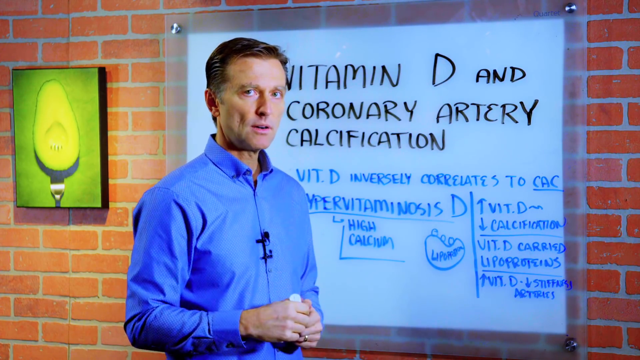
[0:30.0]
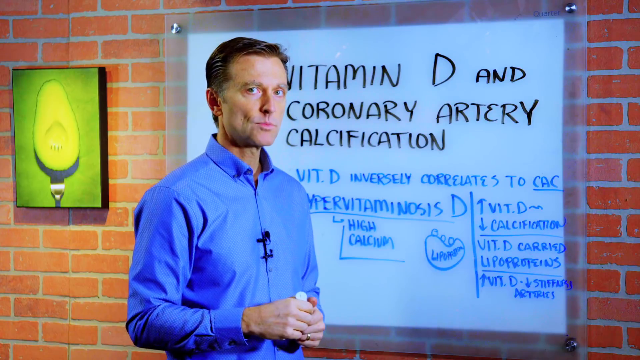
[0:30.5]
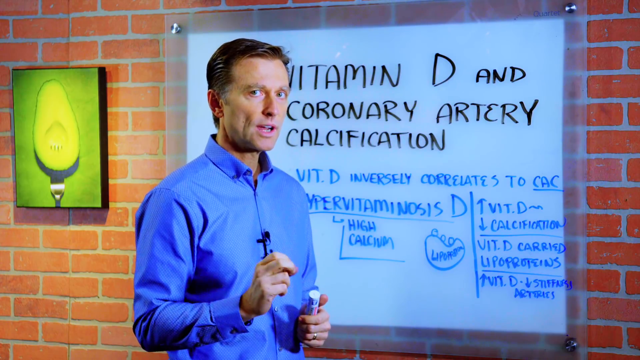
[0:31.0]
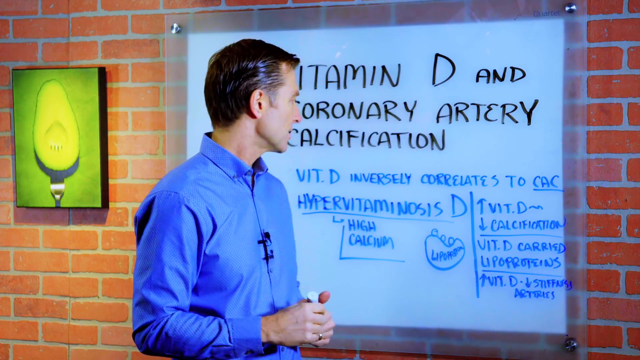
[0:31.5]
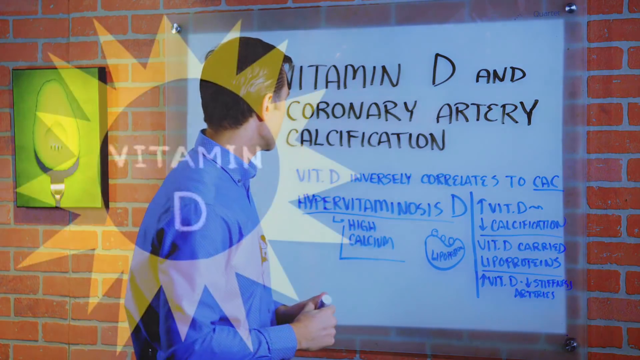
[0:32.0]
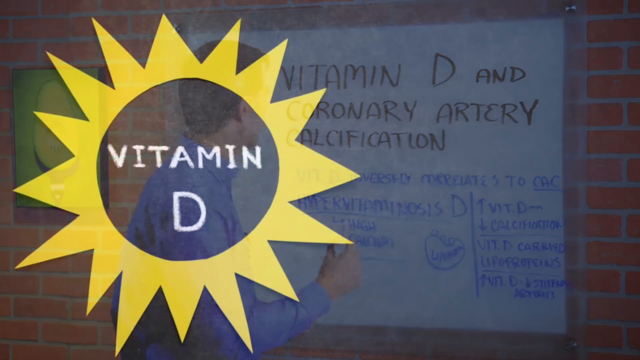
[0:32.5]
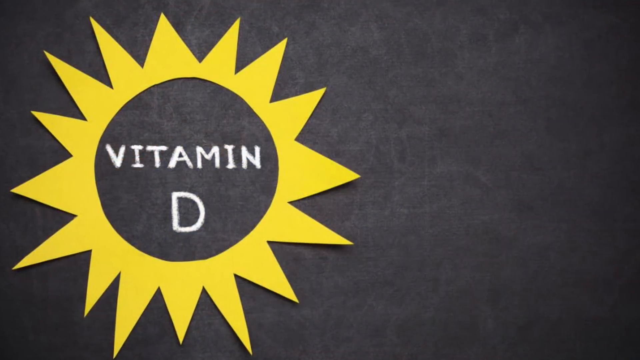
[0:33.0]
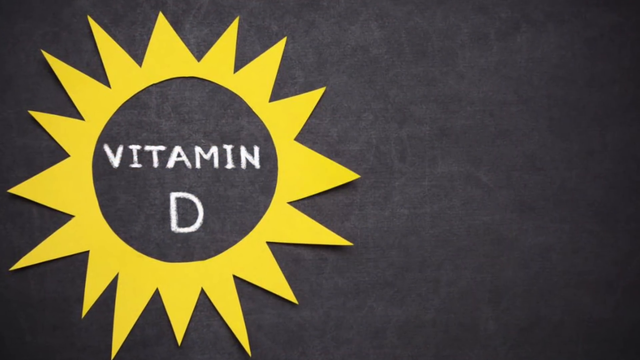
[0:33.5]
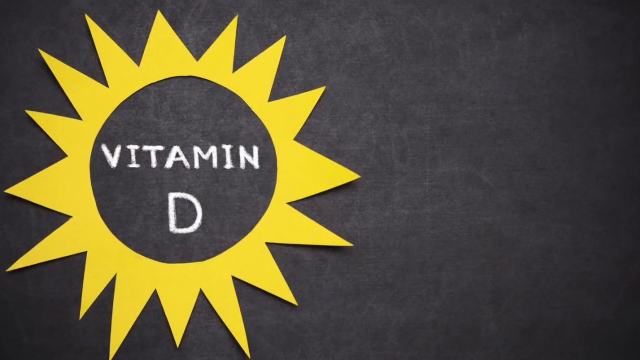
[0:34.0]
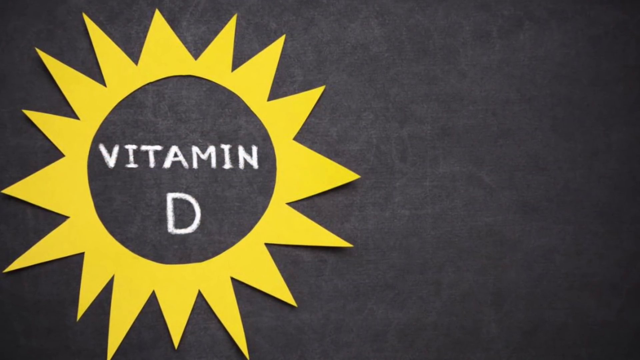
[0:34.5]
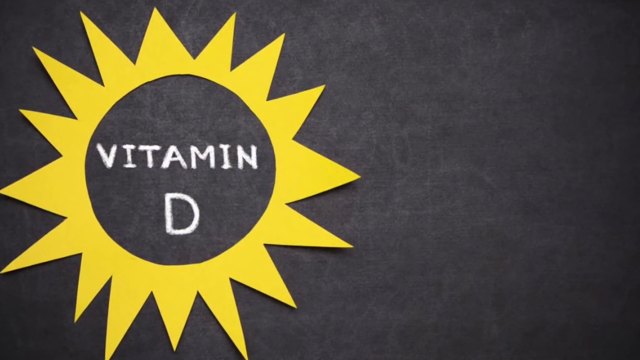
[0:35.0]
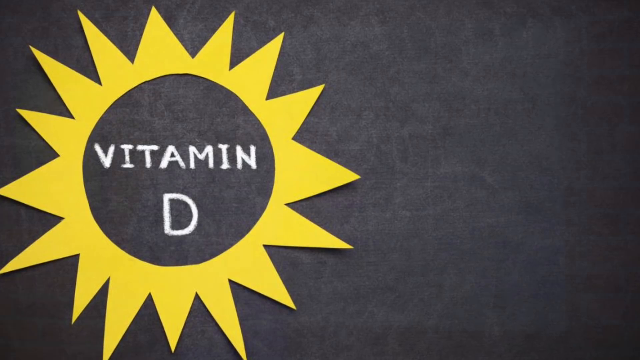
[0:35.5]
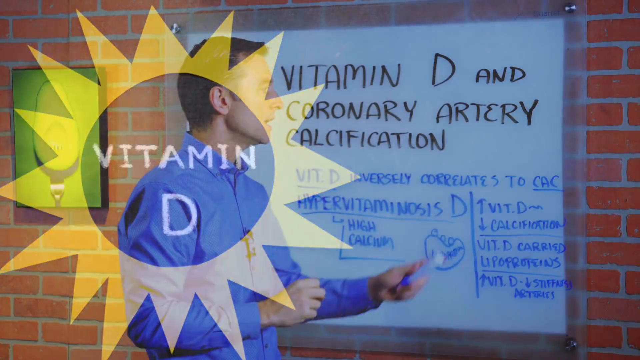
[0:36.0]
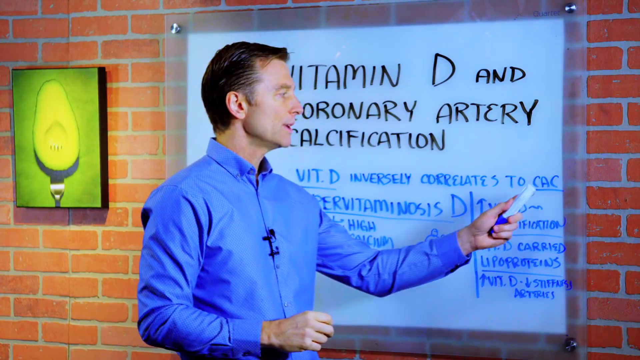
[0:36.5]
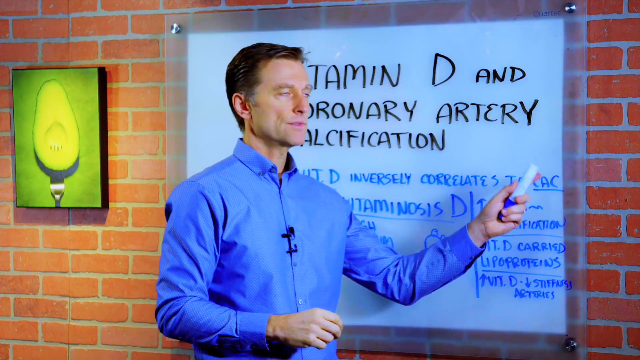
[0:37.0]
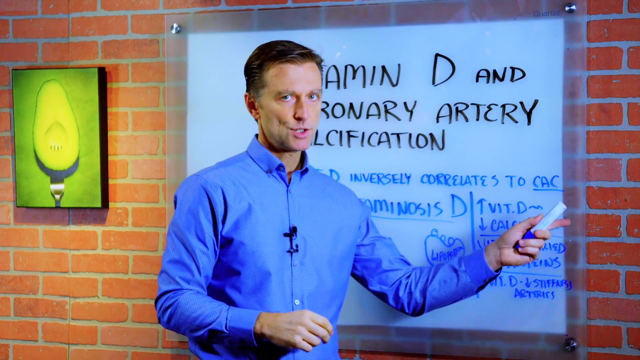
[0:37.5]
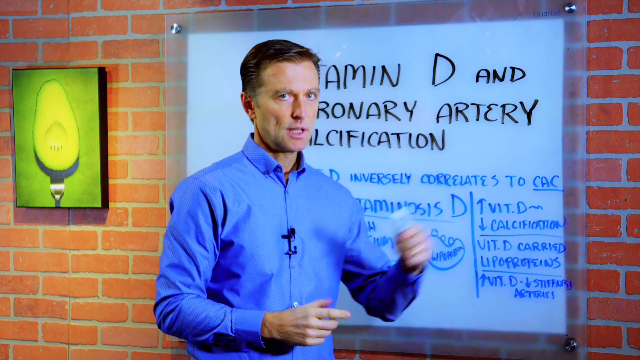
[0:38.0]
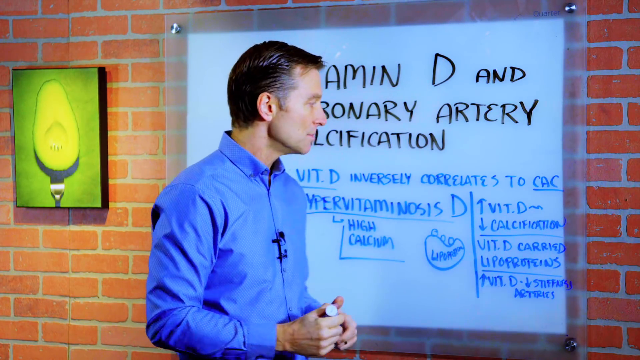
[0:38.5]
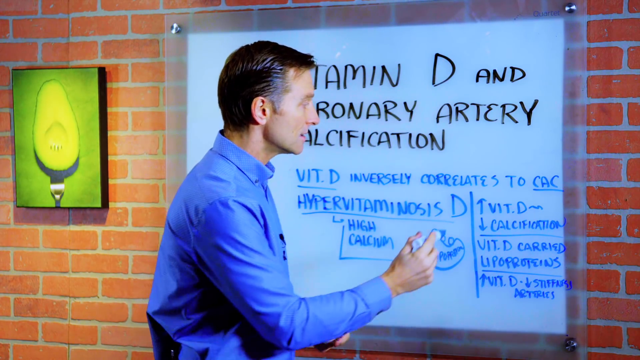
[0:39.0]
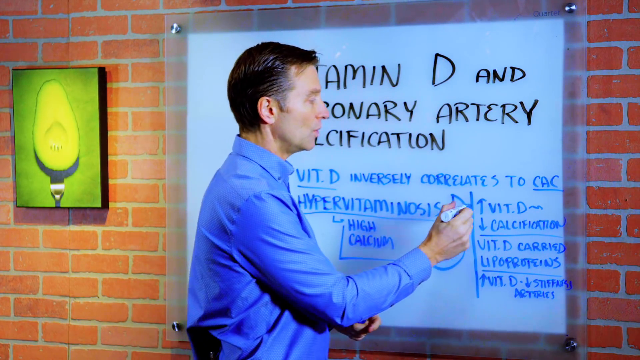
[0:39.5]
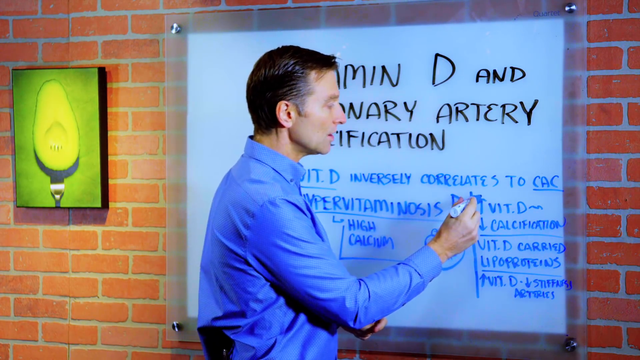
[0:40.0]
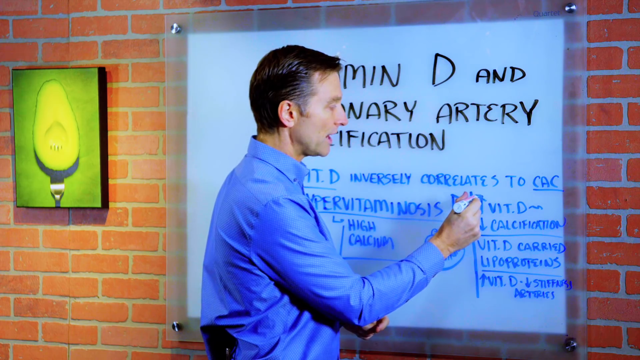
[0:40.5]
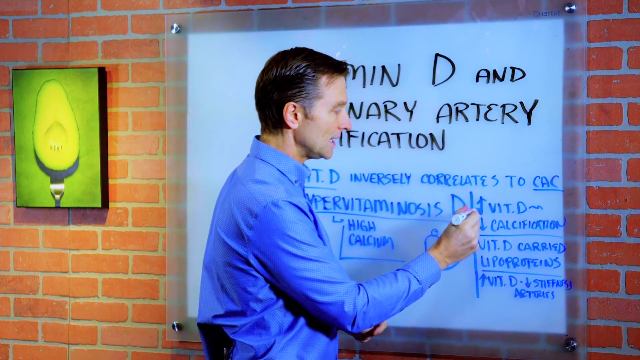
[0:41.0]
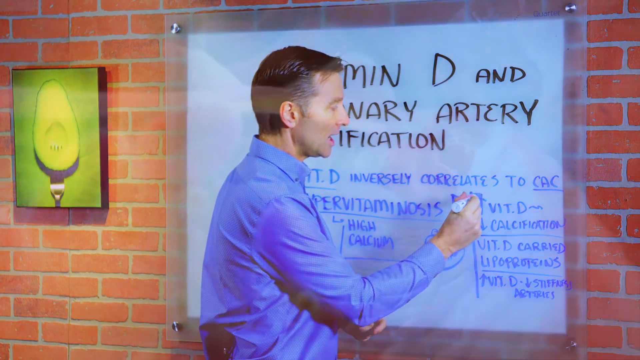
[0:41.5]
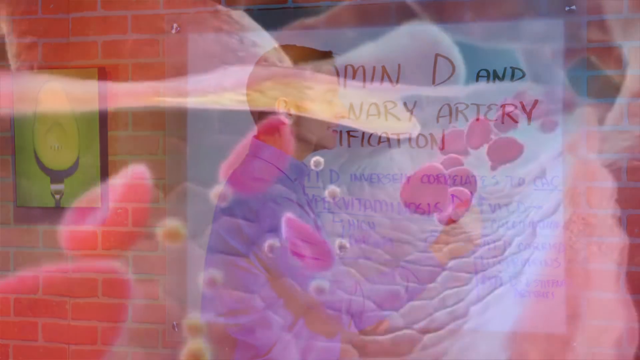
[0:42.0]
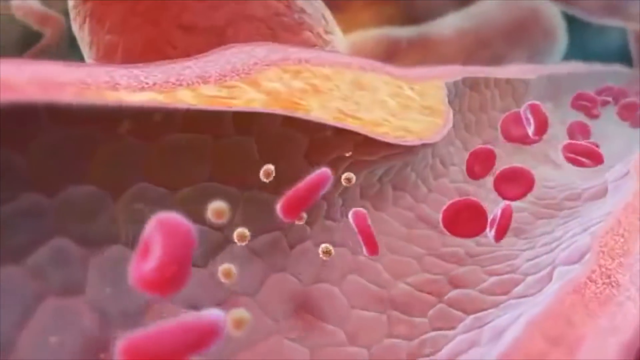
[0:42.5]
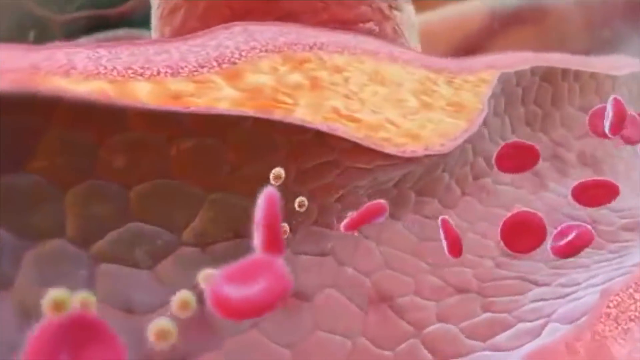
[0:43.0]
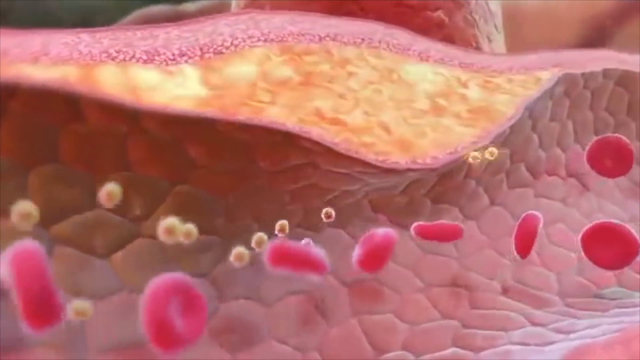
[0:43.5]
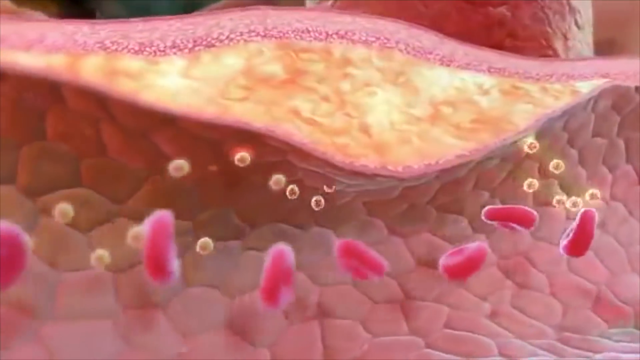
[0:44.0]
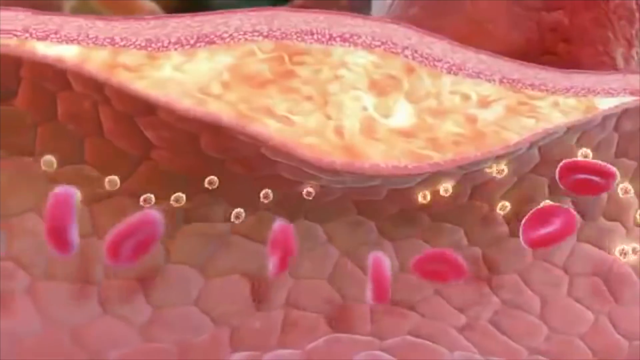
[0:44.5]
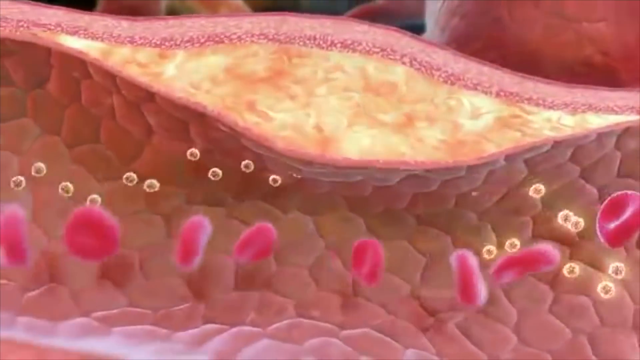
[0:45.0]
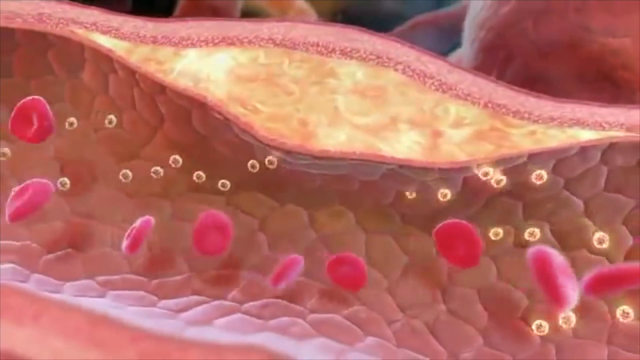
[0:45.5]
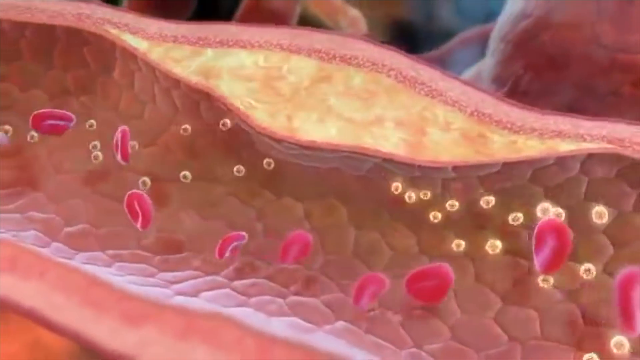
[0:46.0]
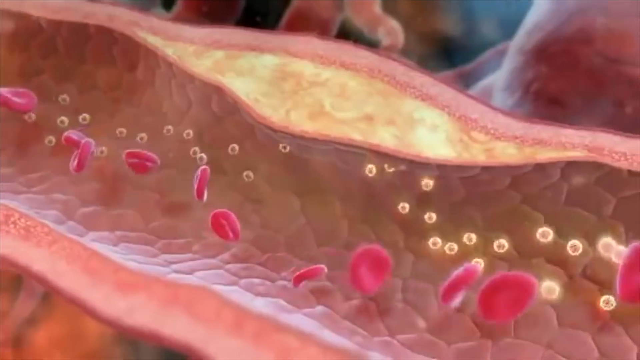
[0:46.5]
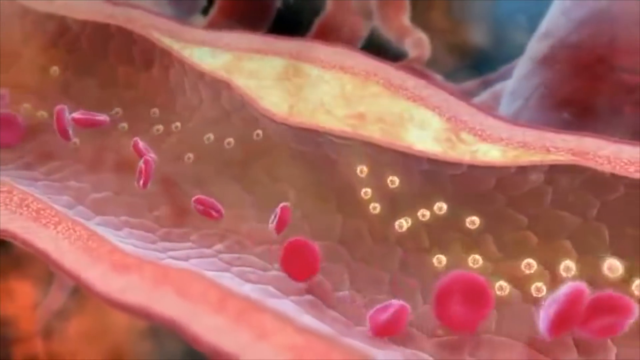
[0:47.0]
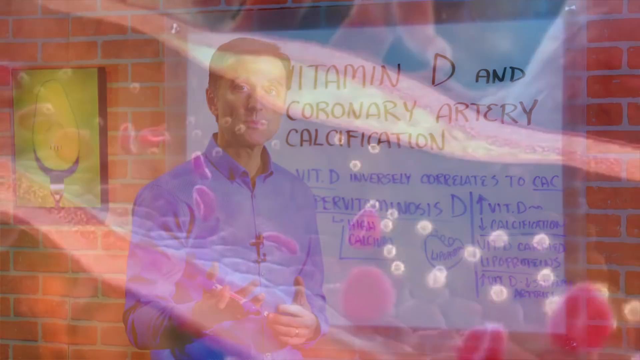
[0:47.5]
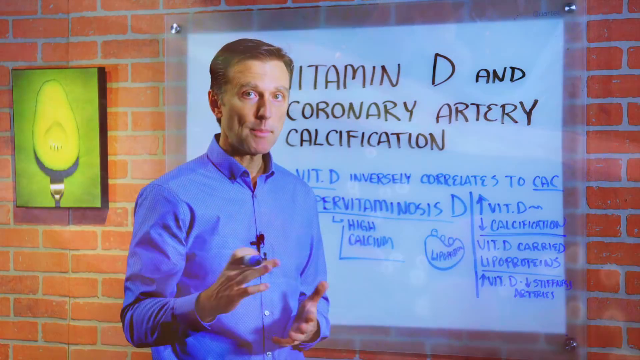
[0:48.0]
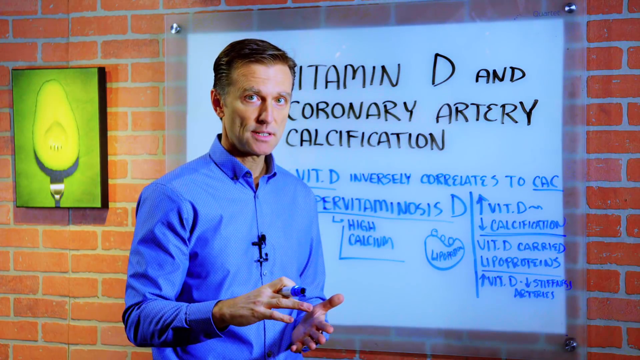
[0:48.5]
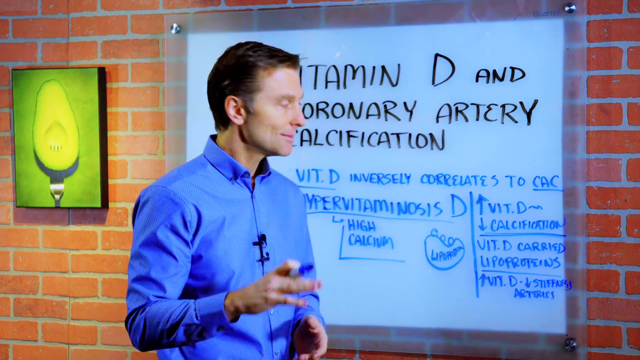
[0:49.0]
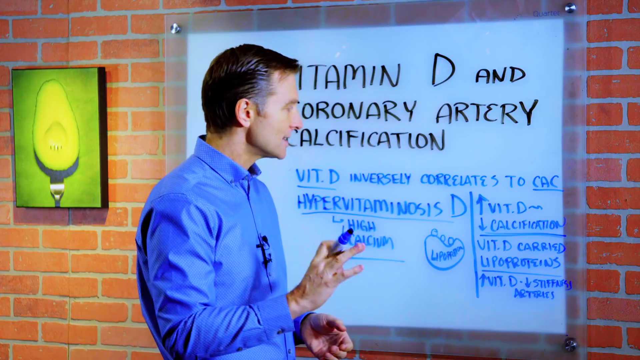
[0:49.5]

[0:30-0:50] The man moves a little toward the left side of the whiteboard, turns slightly, and holds his hands out palm up. The video then shows a blackboard with what looks like a huge pointed sun made of construction paper, with about 12 or 15 pointed rays coming out. In the middle it says "vitamin D," apparently written in chalk. The camera zooms in a little and goes back to the right-hand column of the dry erase board. He is either looking at that column or pointing at something to the left, possibly the sun; it is unclear. He uses the marker again, apparently changing the arrow for vitamin D: there is an arrow going up and down on the right-hand side, and on the left a vertical line runs all the way down, with "vitamin D" underneath the calcification. The board says "vitamin D increases," and he goes over it again, apparently for emphasis, marking it going up. The video then cuts to a 3D image of red cells and little white cells inside some kind of tunnel, maybe the bloodstream. What seems to be a pink cell wall is above, and a small curved ellipse goes down, with orange and pink swirling around.